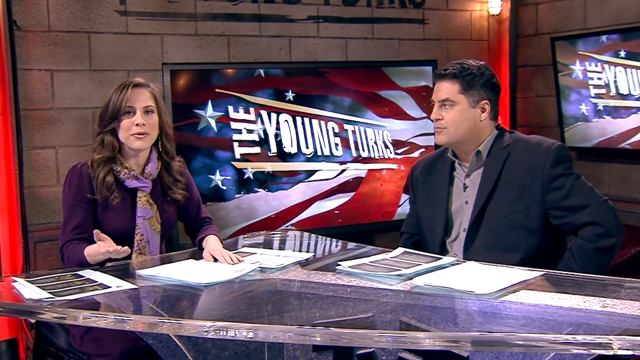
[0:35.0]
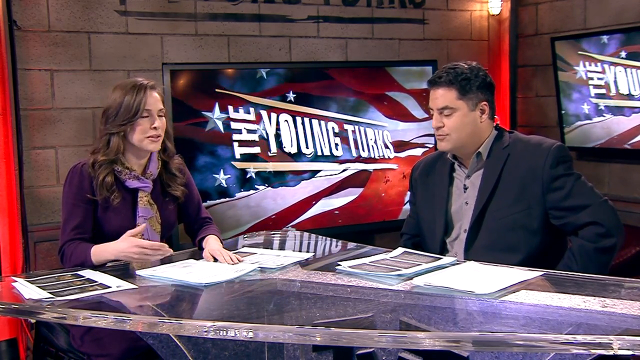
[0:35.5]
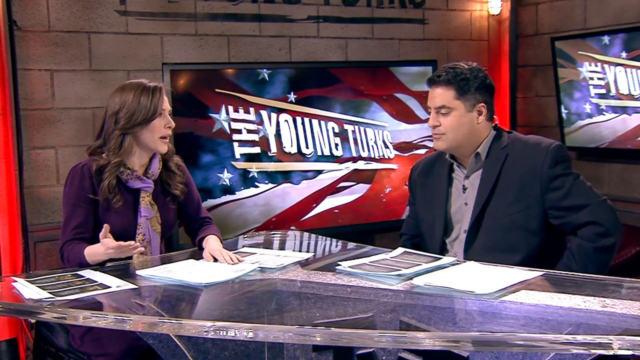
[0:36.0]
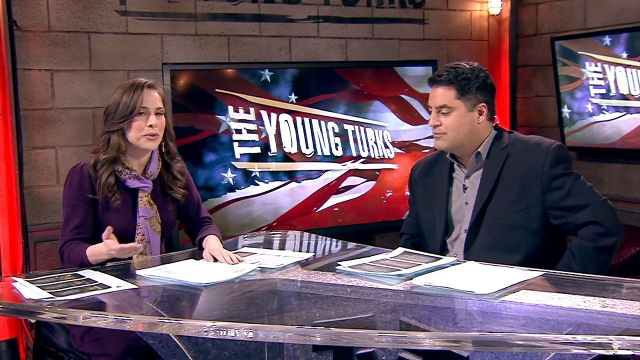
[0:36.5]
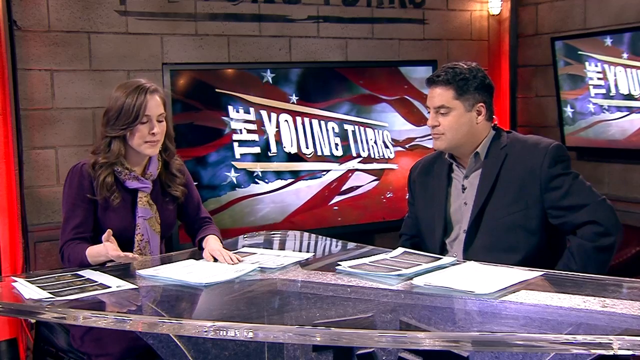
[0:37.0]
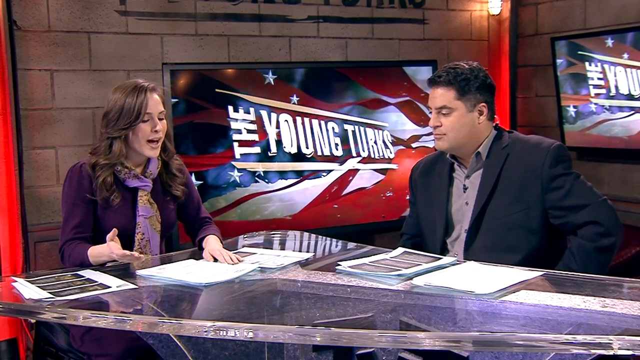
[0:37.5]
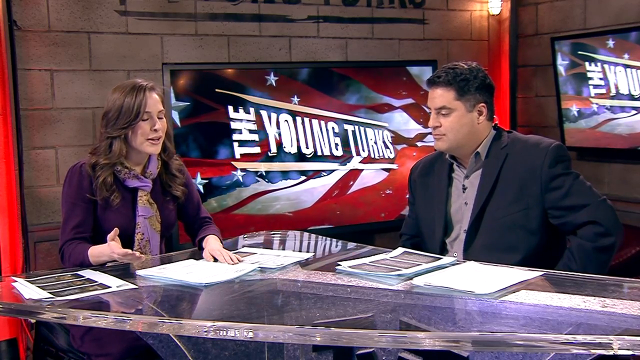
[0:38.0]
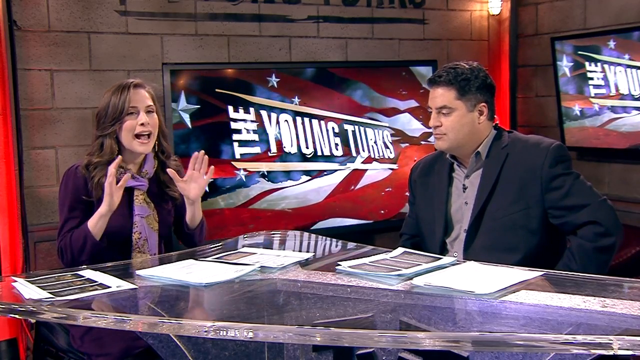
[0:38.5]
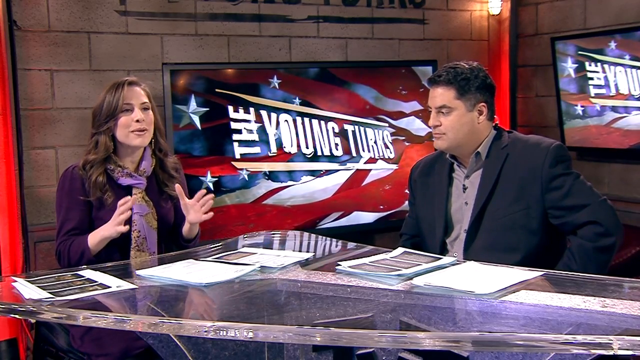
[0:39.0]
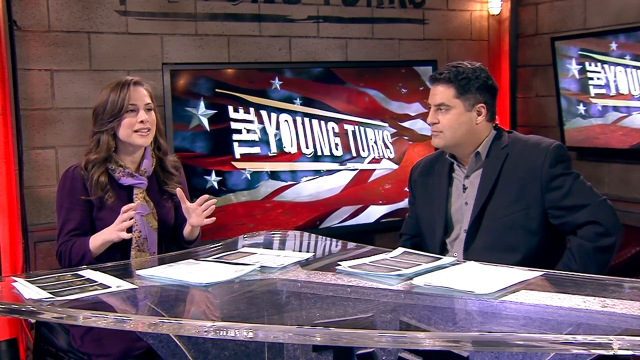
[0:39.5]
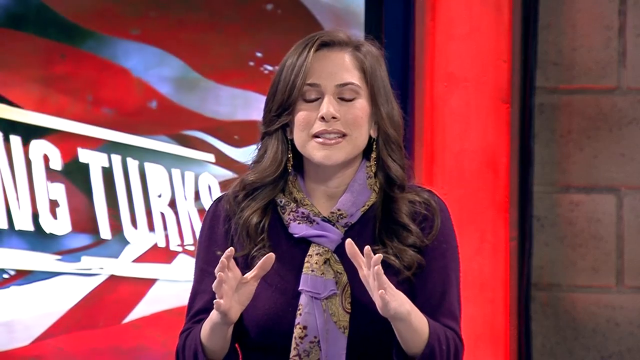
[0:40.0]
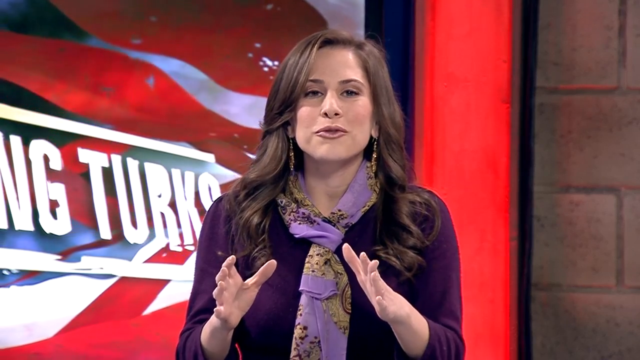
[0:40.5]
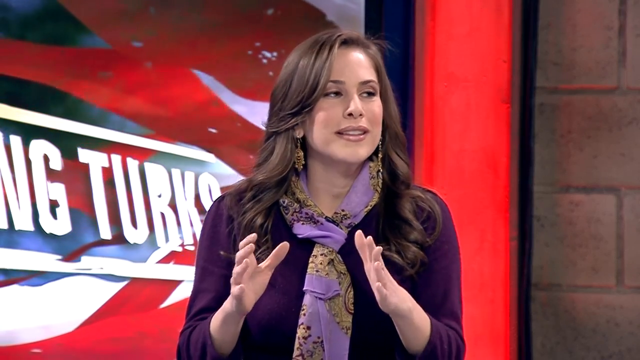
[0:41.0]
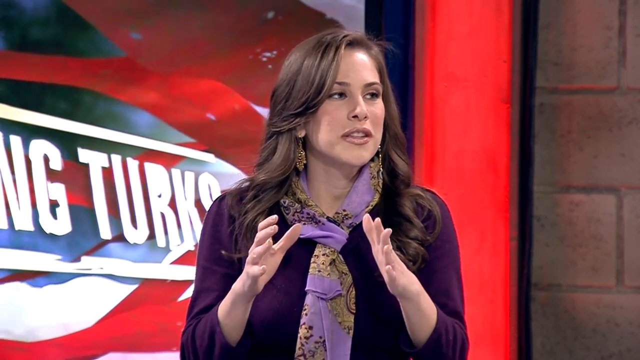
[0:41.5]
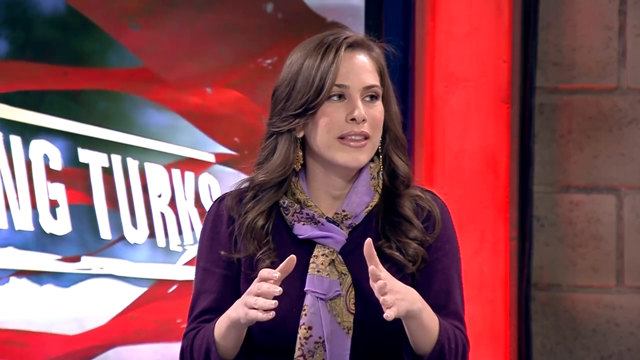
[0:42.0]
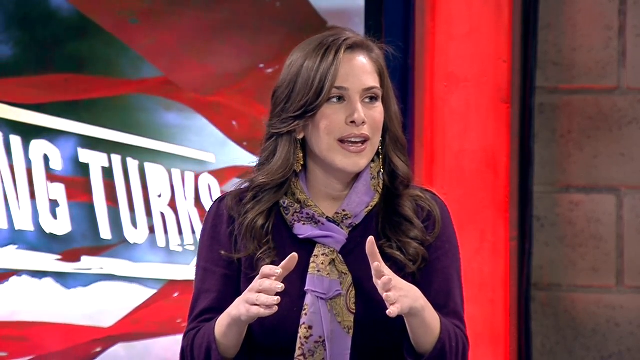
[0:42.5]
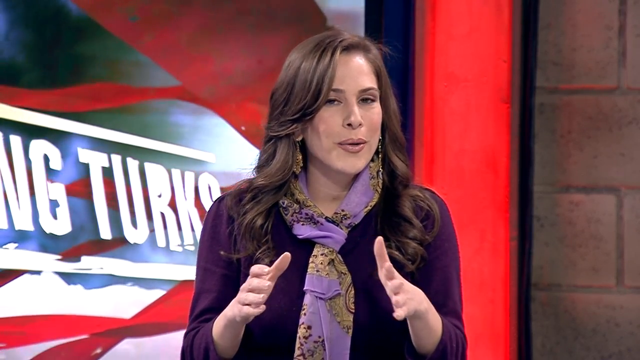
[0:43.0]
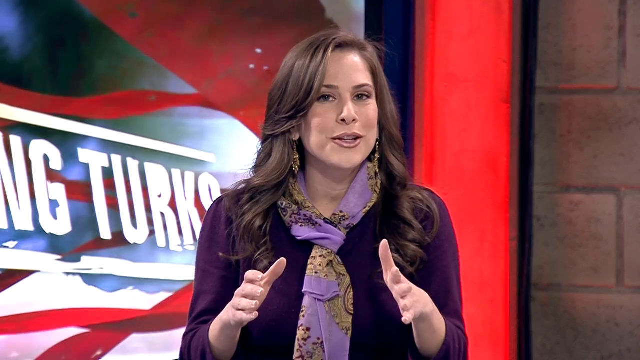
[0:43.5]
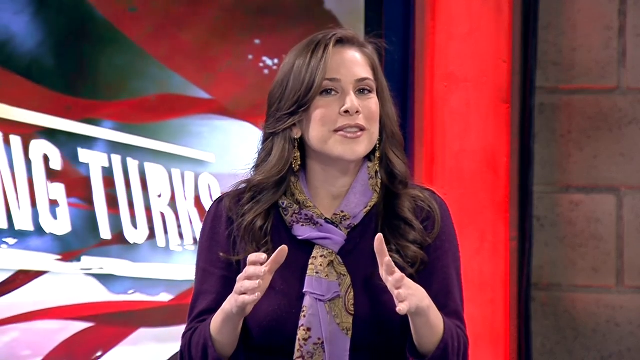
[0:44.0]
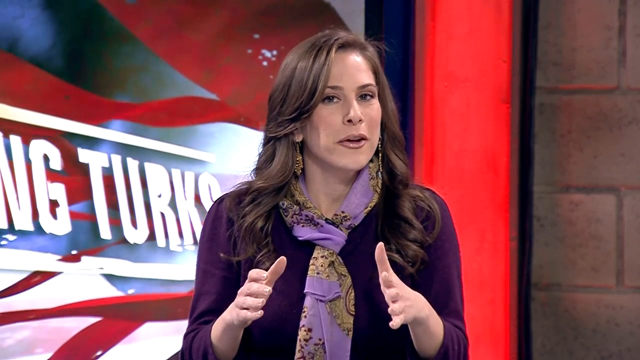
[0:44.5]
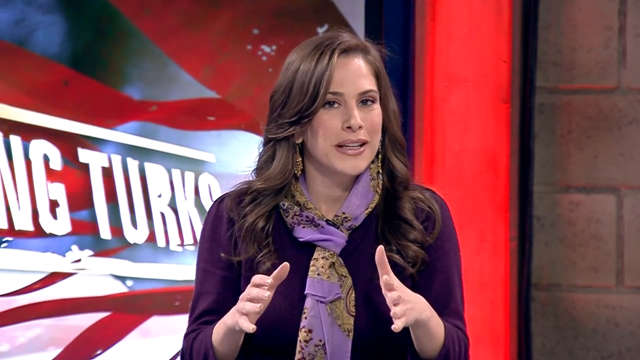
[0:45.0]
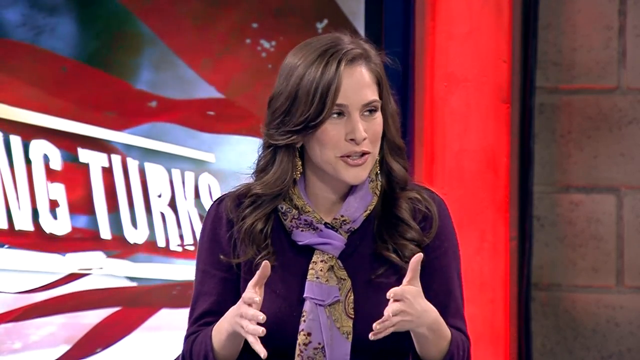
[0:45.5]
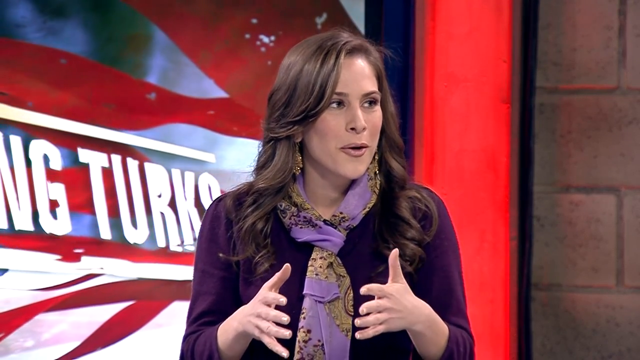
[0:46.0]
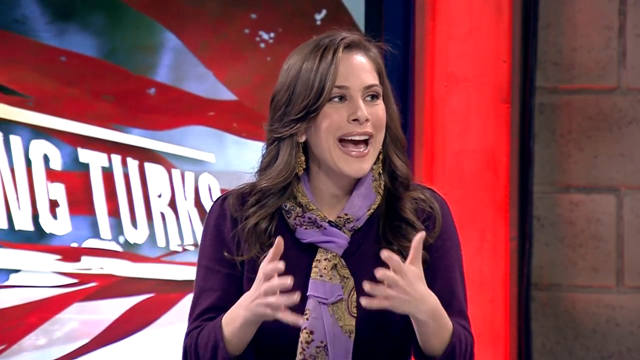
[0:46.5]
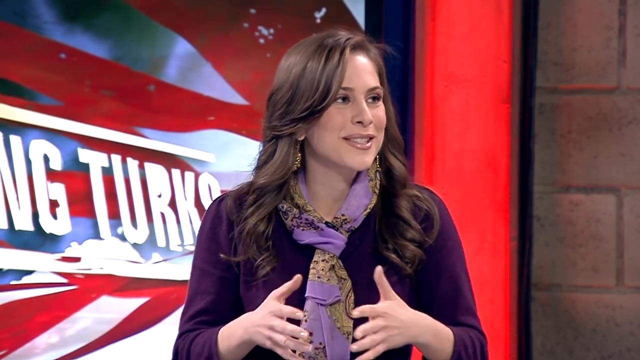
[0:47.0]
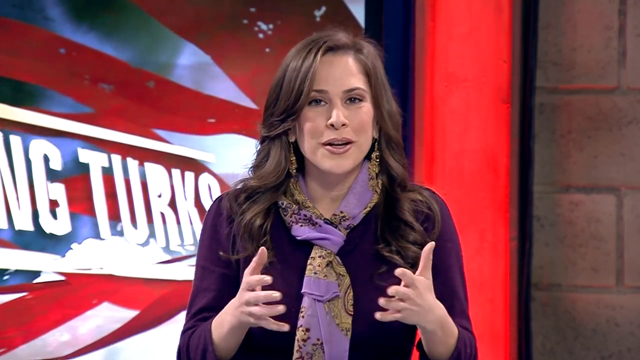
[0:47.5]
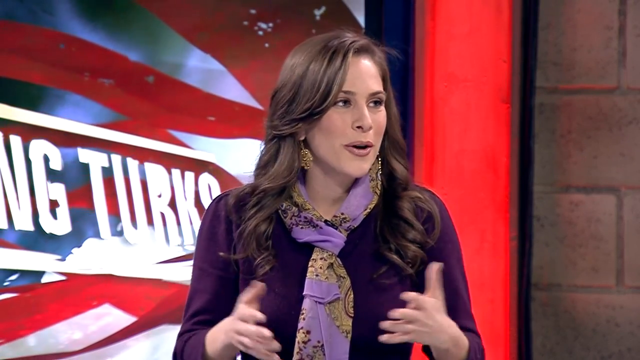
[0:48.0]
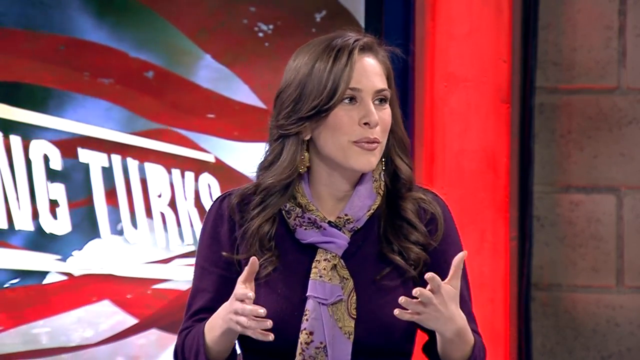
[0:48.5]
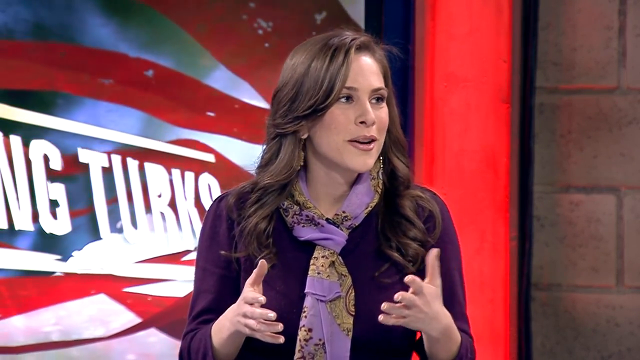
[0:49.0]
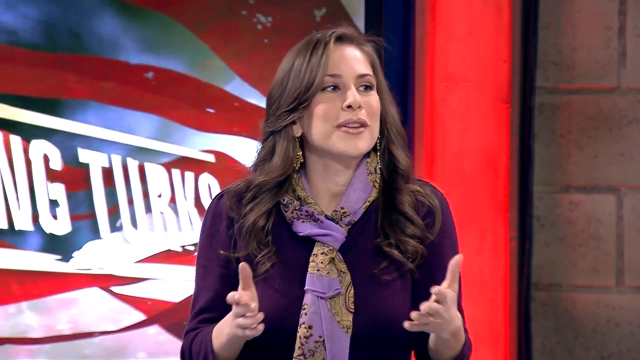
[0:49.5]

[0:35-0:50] The two reporters sit at a table having a conversation. The woman is on the left in her dark purple sweater and a scarf printed in gold and light purple; her hair is brown and down, and she wears long gold dangly earrings. The man is on the right in a dark open blazer and gray shirt, with dark hair. They talk to each other across the table, with a series of papers in front of them, which they possibly refer to as part of the story. The screen then pans to just the woman, who talks with her hands moving and seems to be speaking somewhat emphatically. The newsroom background is a light tan brick wall with a TV screen reading "The Young Turks" with an American flag flowing behind it, showing the white and red stripes, the stars and the blue. Part of another TV screen is visible in the corner on the right, so there appears to be a main TV in the background and another TV to the right. On the left of the screen is some kind of red outline, possibly another screen or something else.